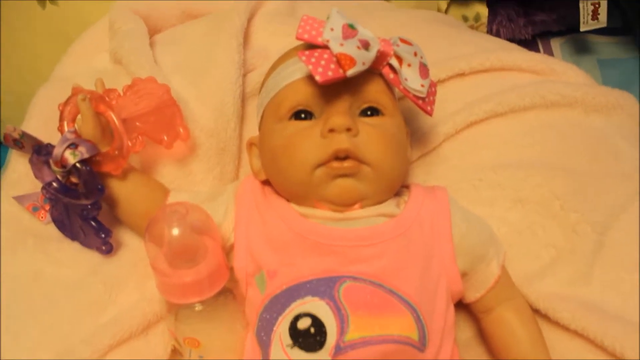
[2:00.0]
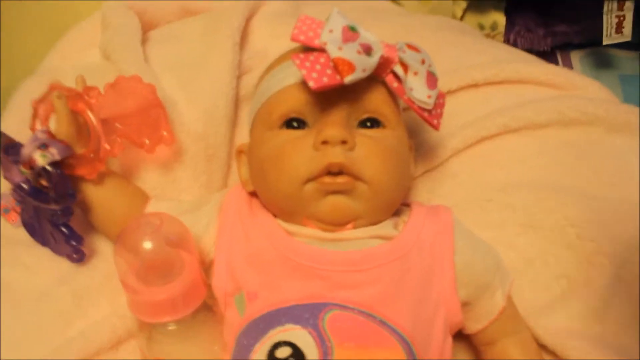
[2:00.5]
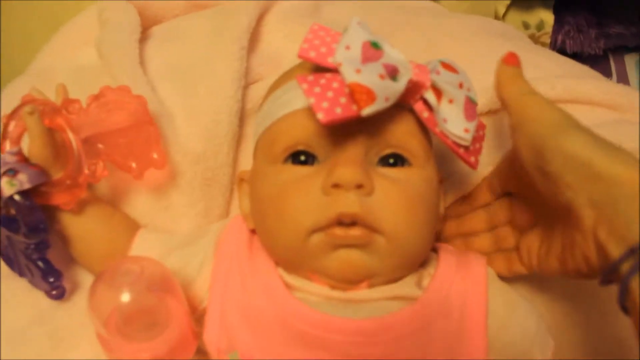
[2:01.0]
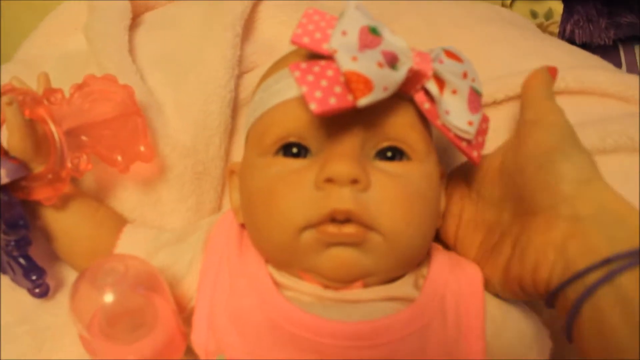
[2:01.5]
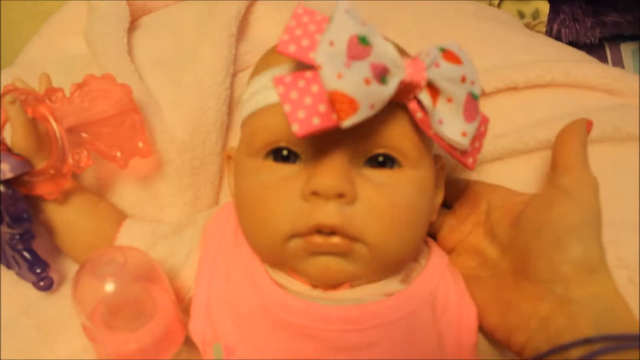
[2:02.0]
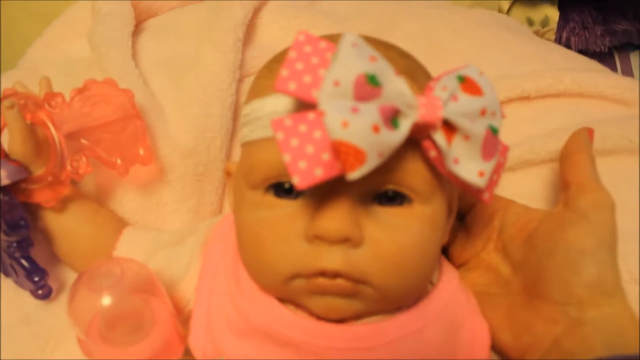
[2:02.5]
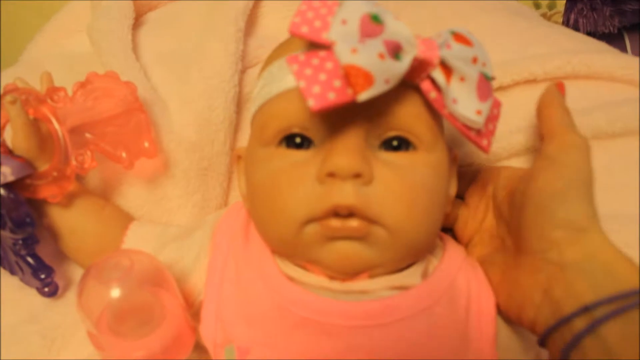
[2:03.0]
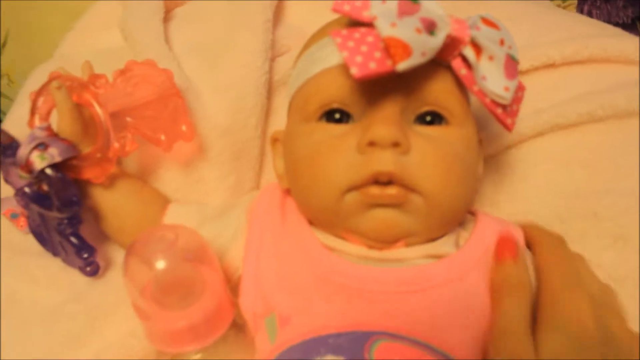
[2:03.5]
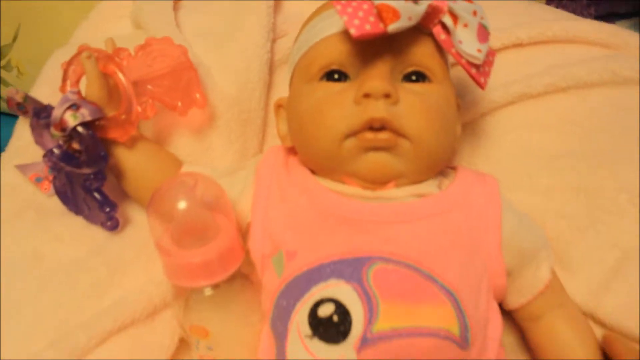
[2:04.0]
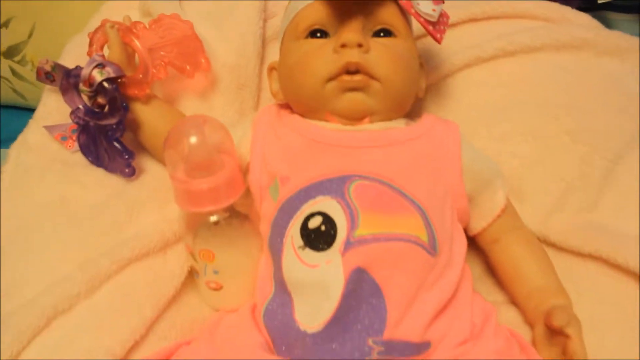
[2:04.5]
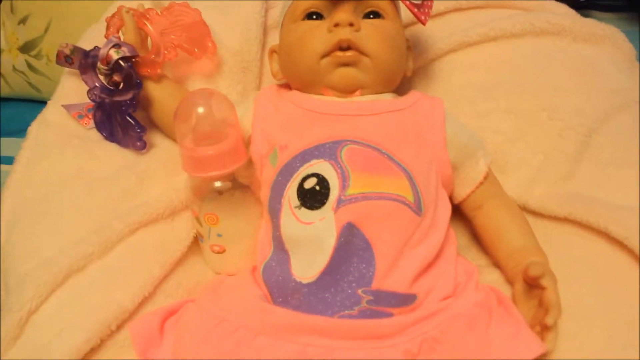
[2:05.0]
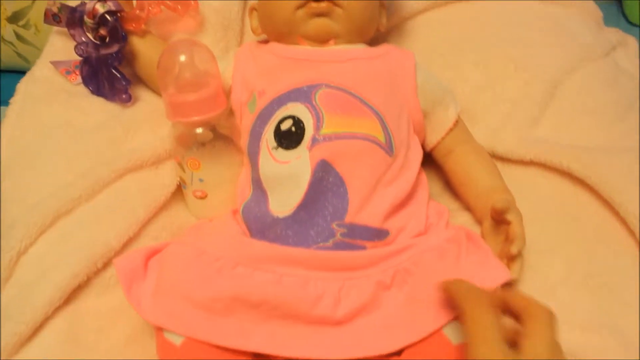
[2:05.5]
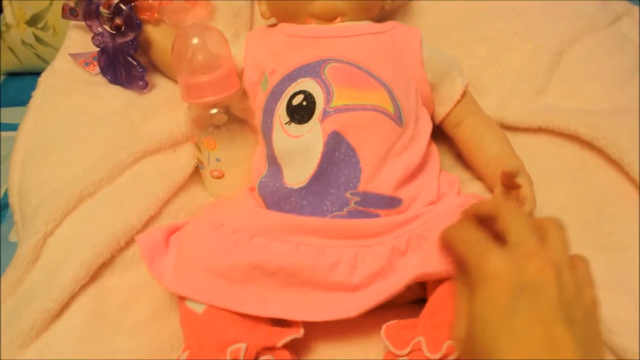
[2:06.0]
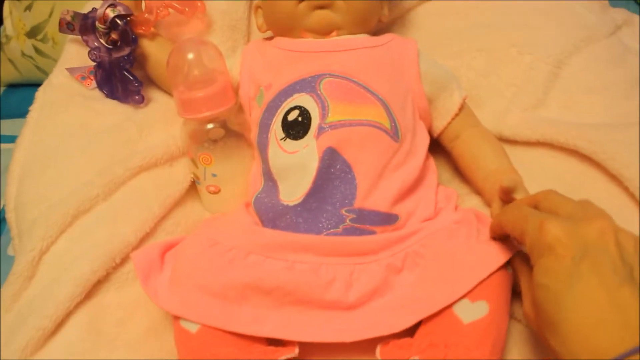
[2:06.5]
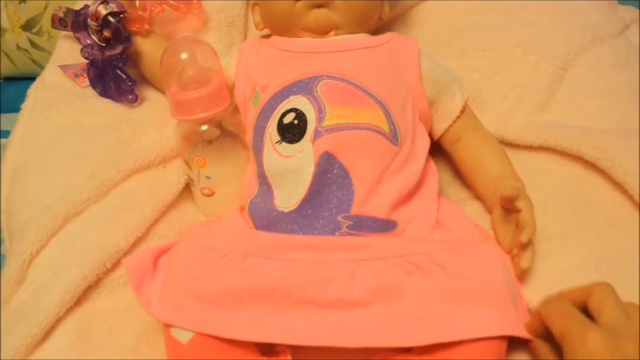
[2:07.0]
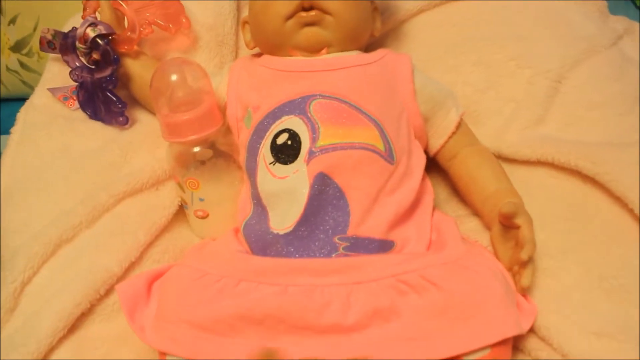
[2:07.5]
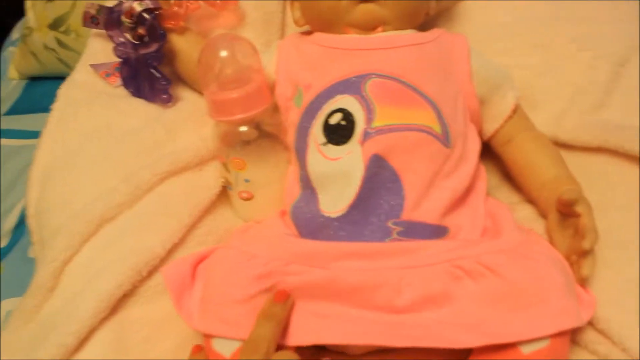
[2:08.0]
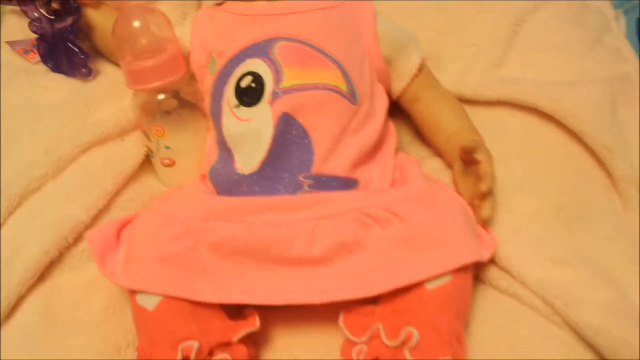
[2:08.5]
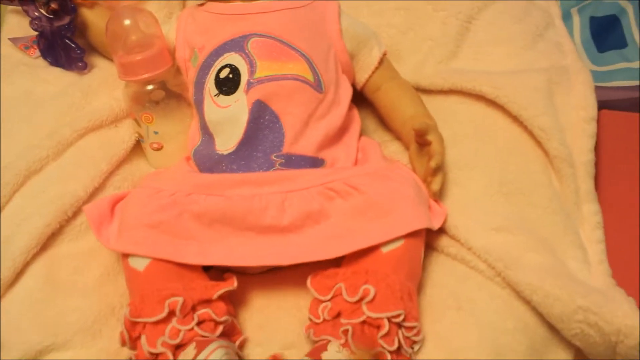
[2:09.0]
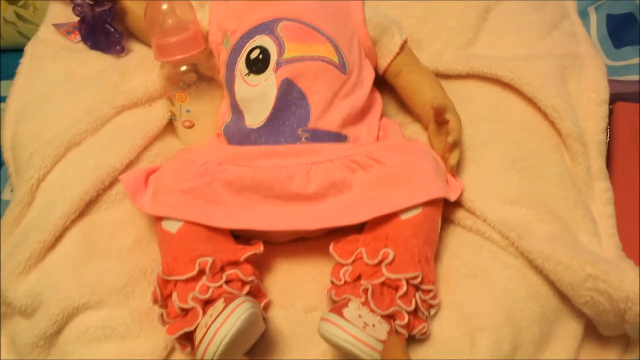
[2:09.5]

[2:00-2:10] The camera holder goes up to the baby doll's head, palms the back of it and lifts it up to show off the white and pink bow with strawberries on it and the white headband. The doll's face is shown. The camera then pans down to the pink dress with a purple and white flamingo design, and a plastic bottle of milk is to the side. The person sort of stretches out the dress with their right hand, which has pink fingernails and two bracelets on the wrist. The doll is on top of a blanket.